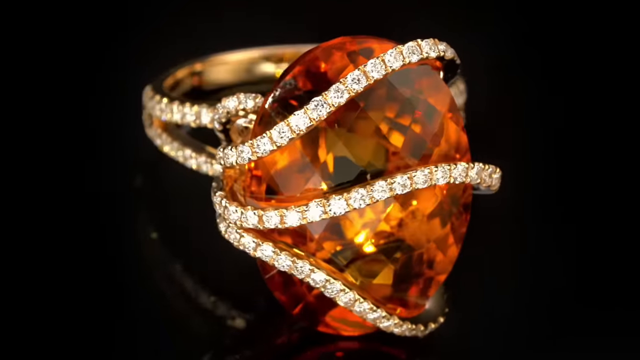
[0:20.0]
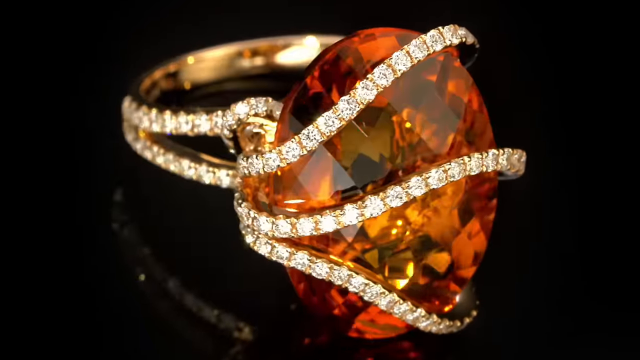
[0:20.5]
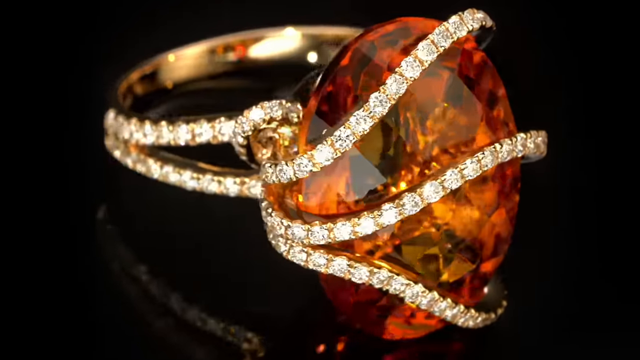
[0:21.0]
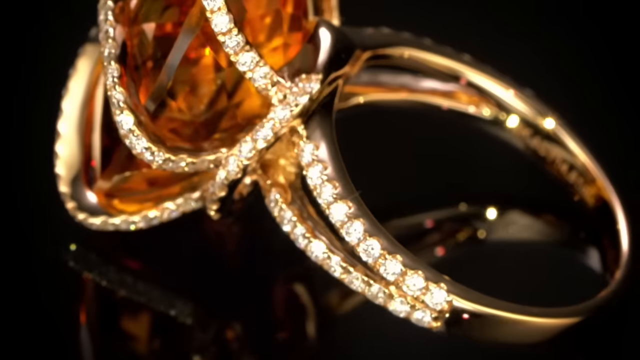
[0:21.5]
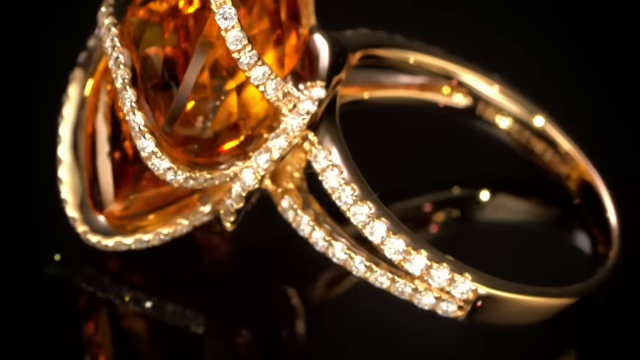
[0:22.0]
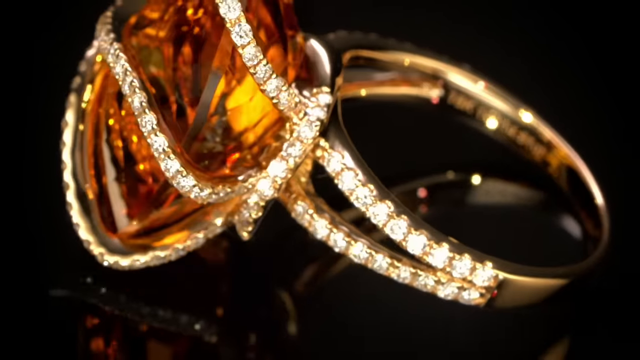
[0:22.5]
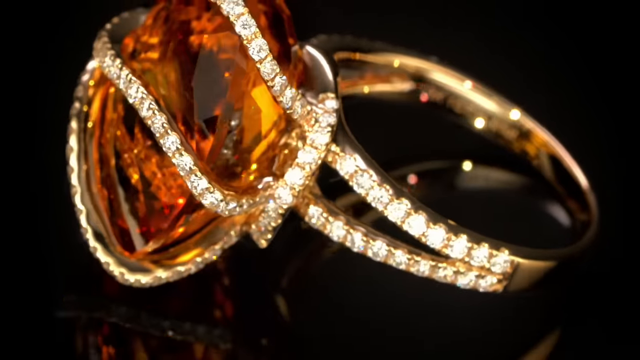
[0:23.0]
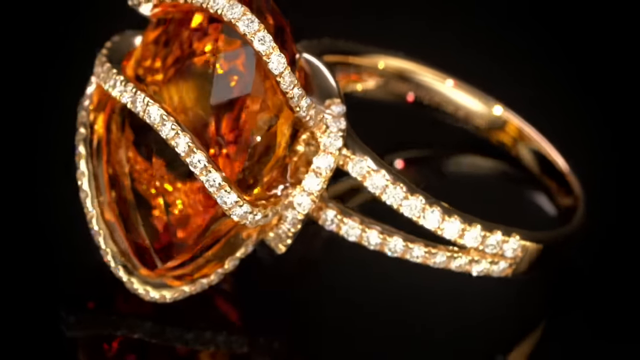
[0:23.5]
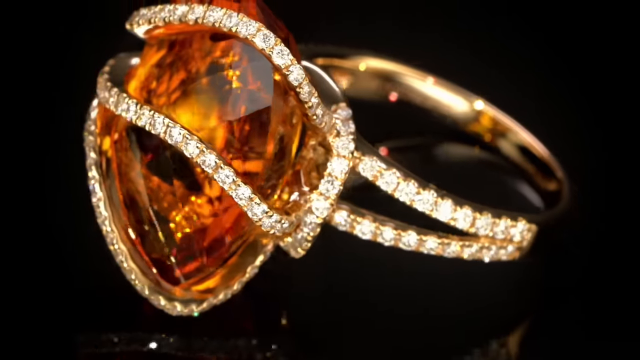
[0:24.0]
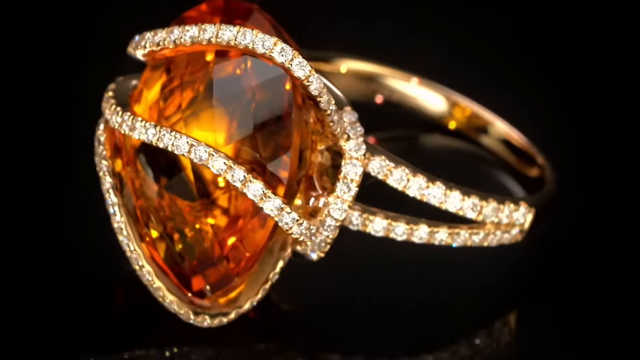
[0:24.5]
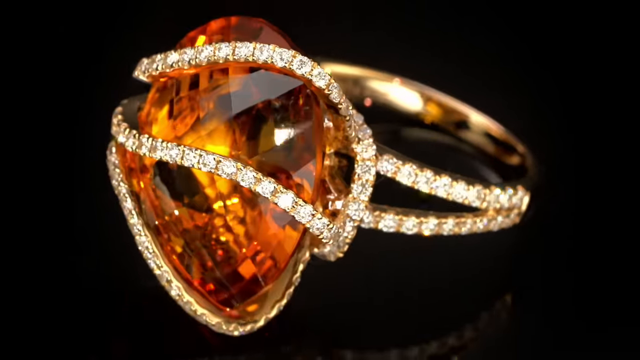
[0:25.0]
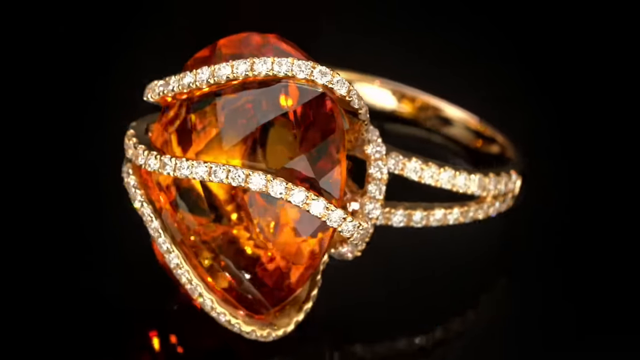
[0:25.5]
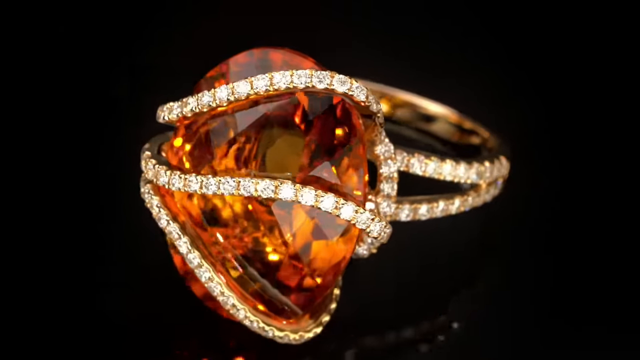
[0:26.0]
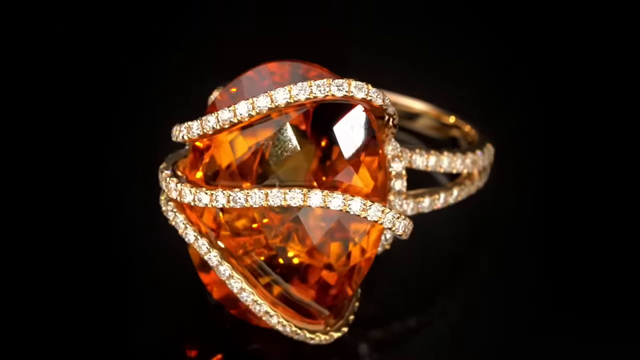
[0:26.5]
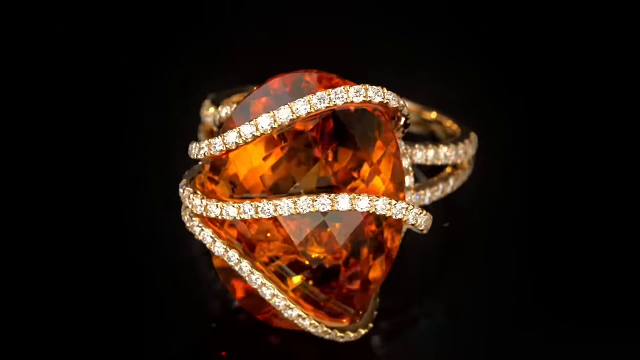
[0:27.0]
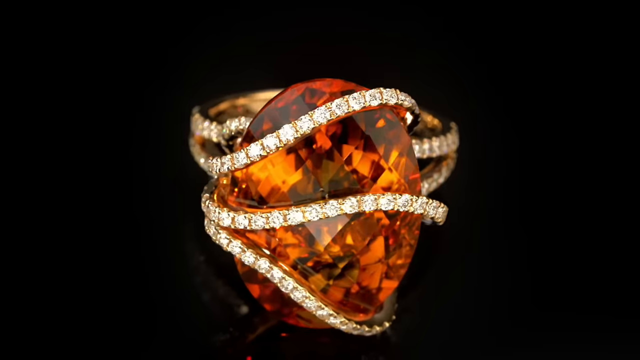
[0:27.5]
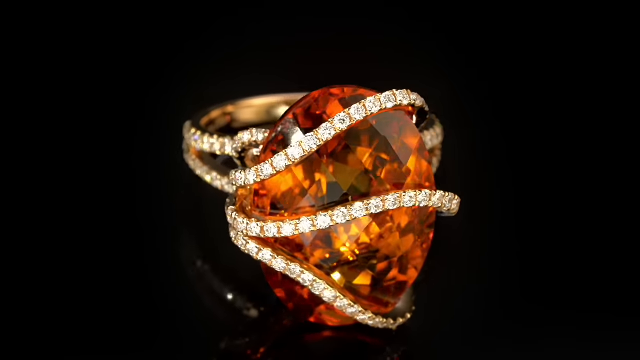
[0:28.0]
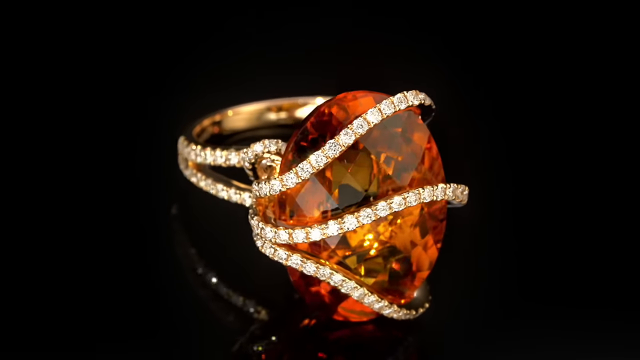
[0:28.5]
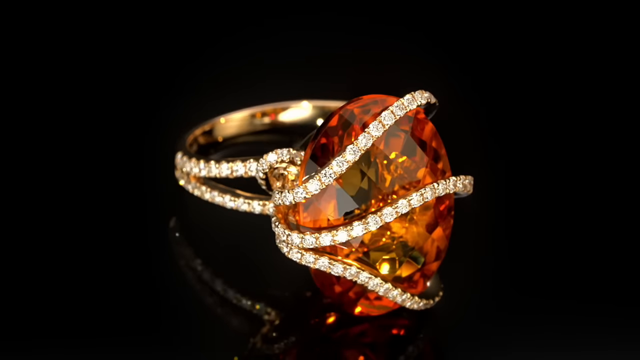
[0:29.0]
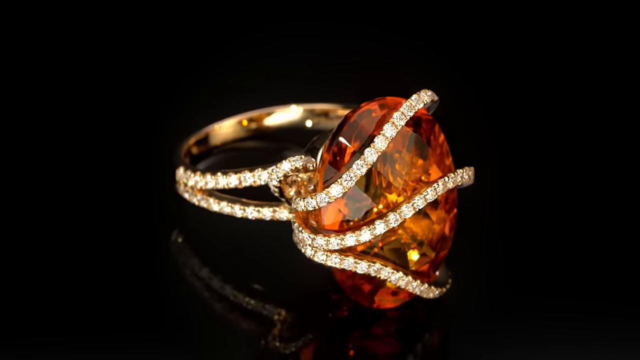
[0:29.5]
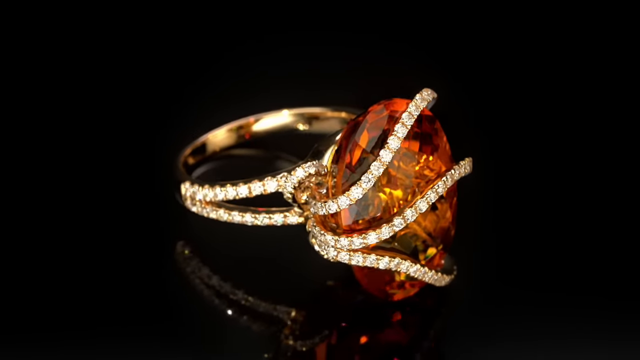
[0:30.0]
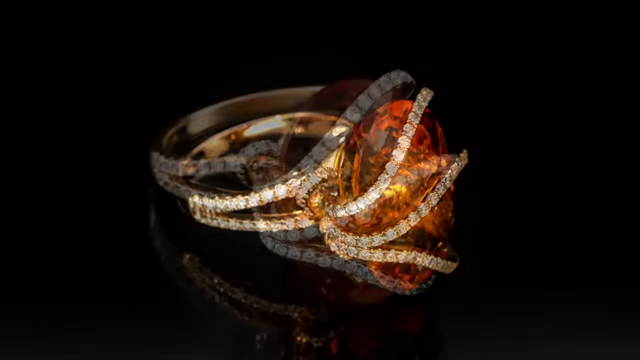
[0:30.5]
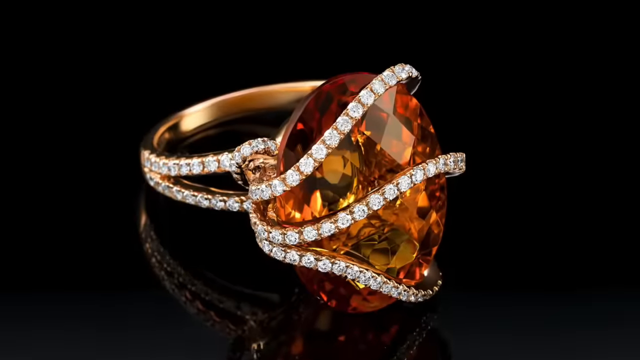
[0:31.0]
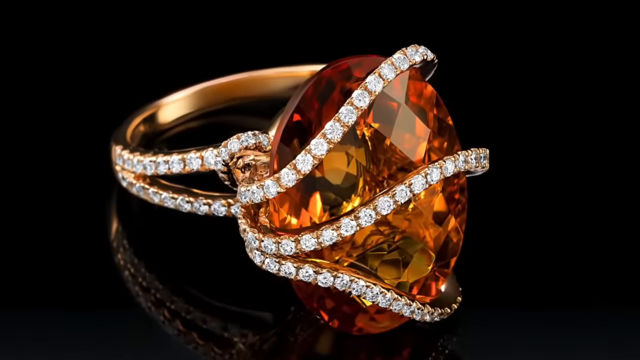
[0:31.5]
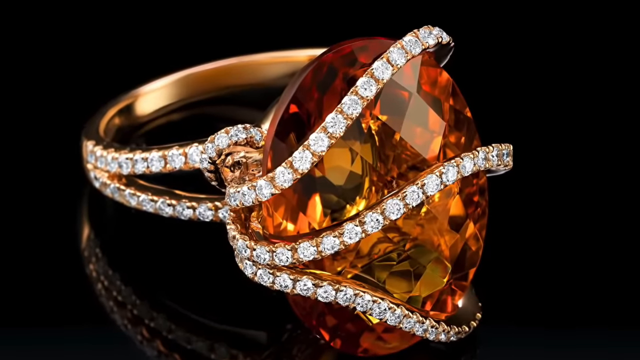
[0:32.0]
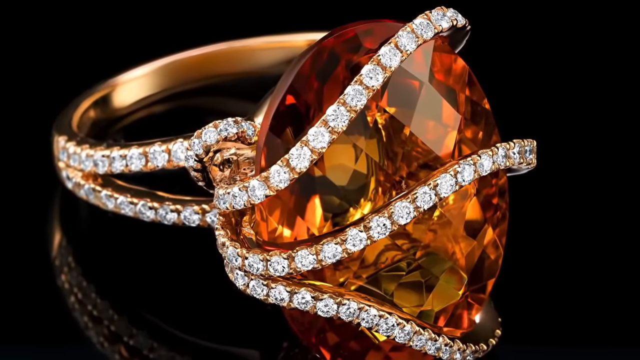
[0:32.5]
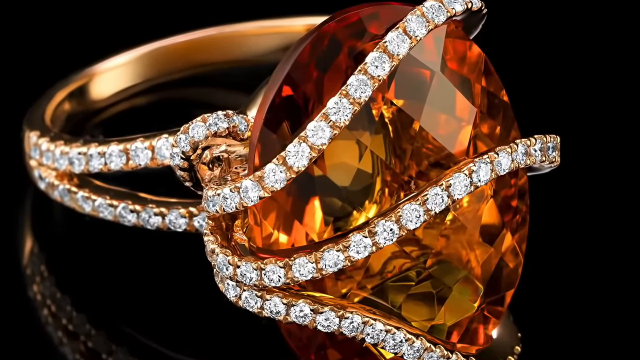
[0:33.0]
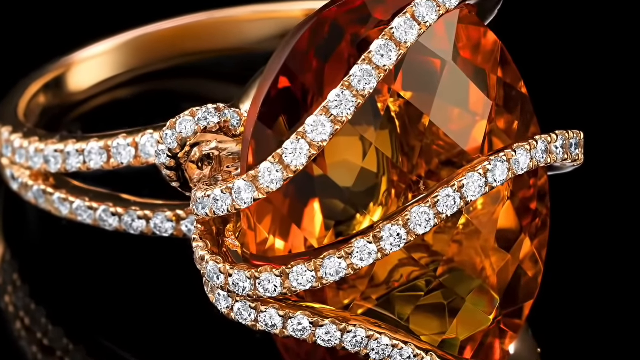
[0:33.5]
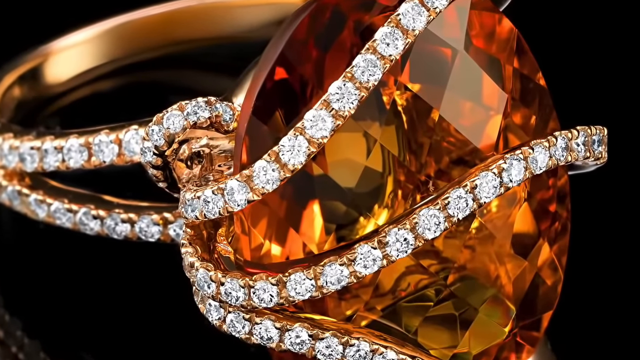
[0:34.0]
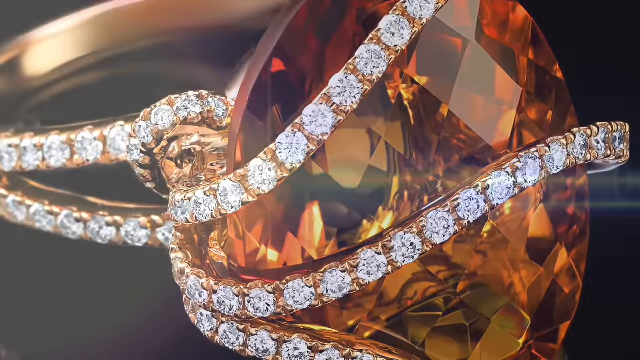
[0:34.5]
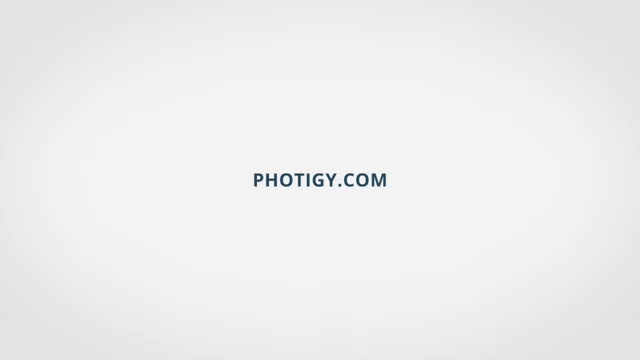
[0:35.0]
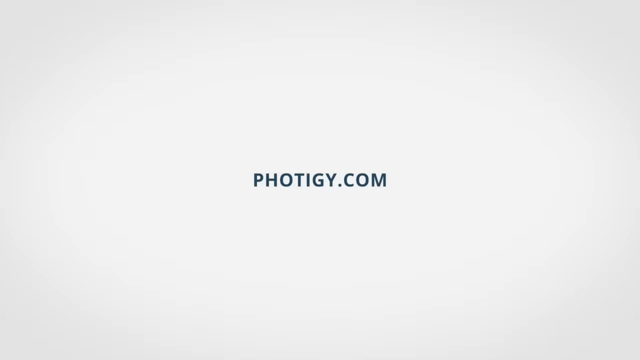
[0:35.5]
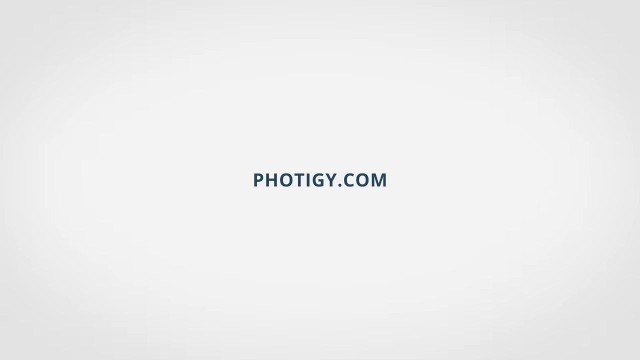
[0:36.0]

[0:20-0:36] The view is close up on the ring, which sparkles. The cuts are in the shape of rectangles all over and are very even, letting it shine. There is no flat top surface; the diamond is cut on every side. As the ring rotates from left to right, the cuts continue on the back side of the stone, and a little of the beveled edge is visible. As it rotates almost all the way around to the right of the screen, the view zooms in on the ring, showing light shining through it, and the clarity looks very good. It zooms in very close, showing the details and the setting, with each of the diamonds shining and sparkling. As the view zooms close into the stone, the screen changes to a white background with an ombre border showing the logo and brand name "photigy.com".